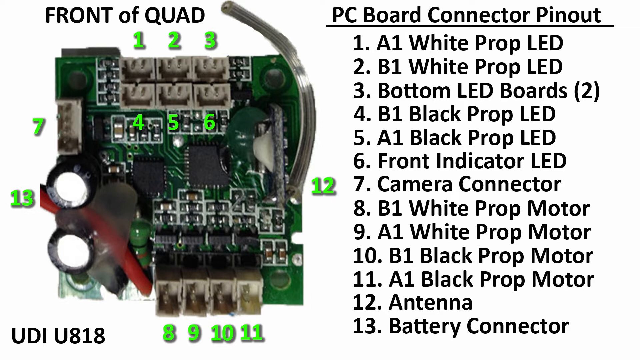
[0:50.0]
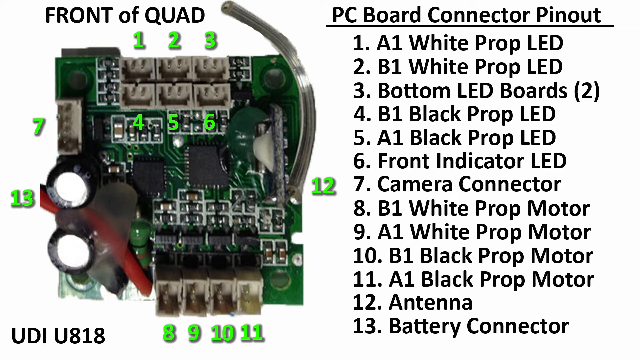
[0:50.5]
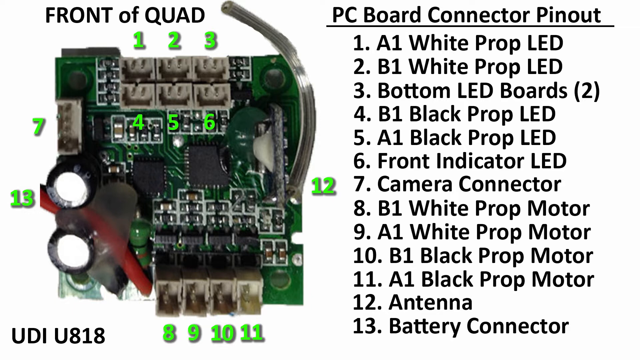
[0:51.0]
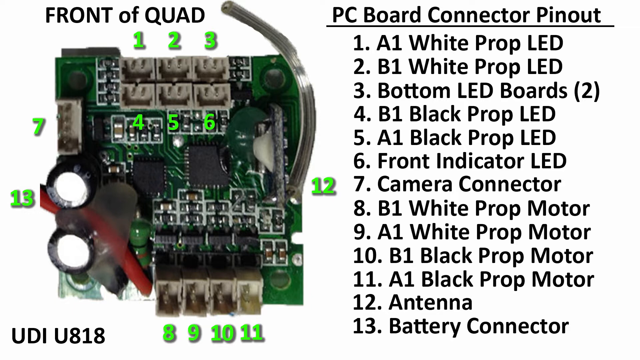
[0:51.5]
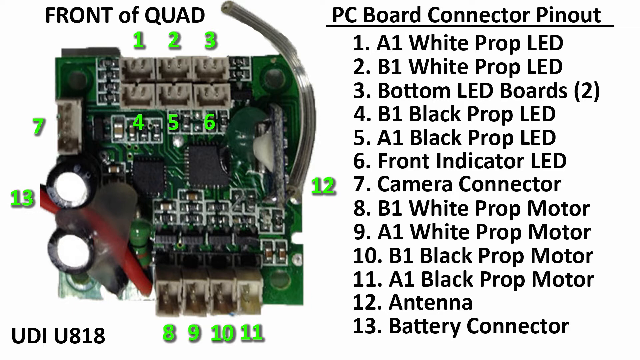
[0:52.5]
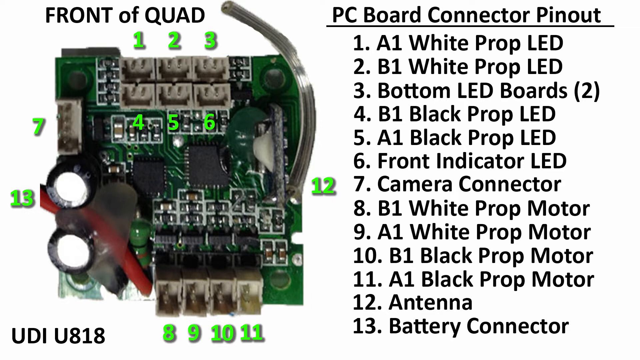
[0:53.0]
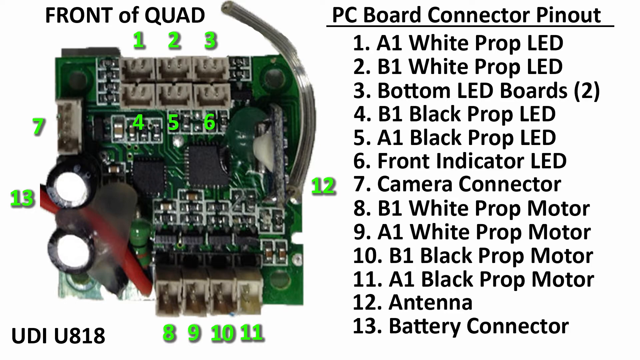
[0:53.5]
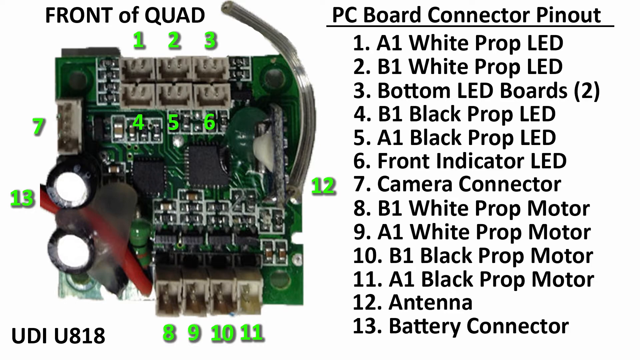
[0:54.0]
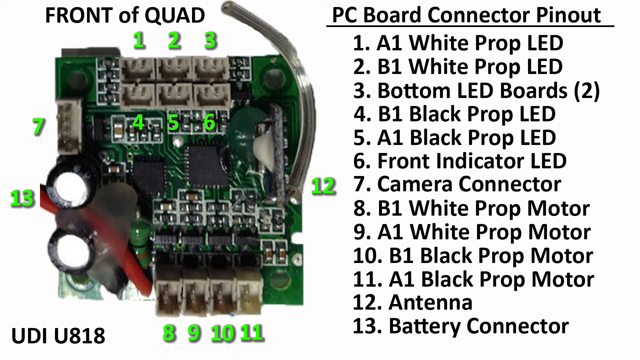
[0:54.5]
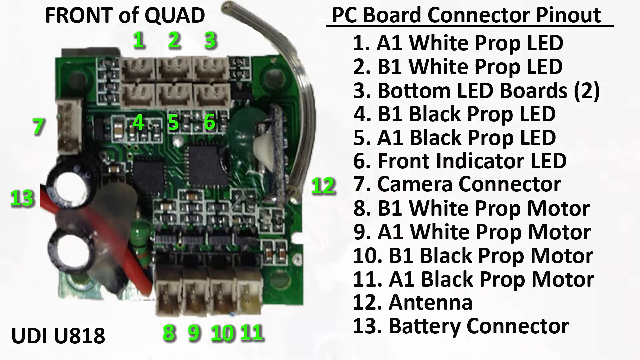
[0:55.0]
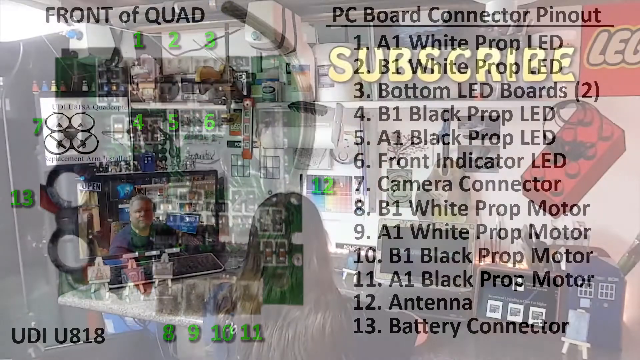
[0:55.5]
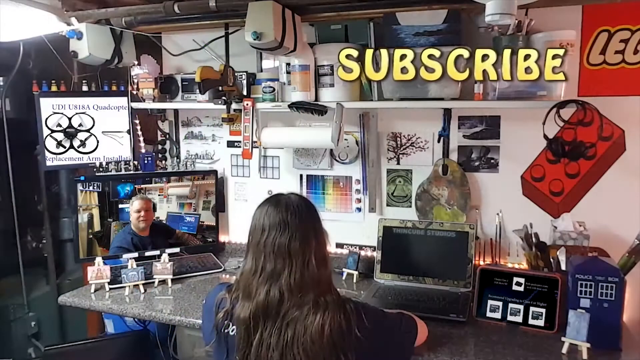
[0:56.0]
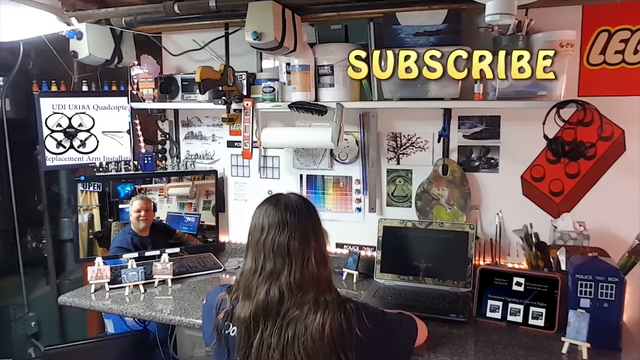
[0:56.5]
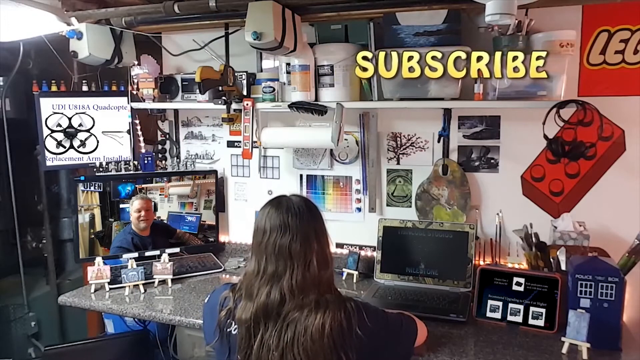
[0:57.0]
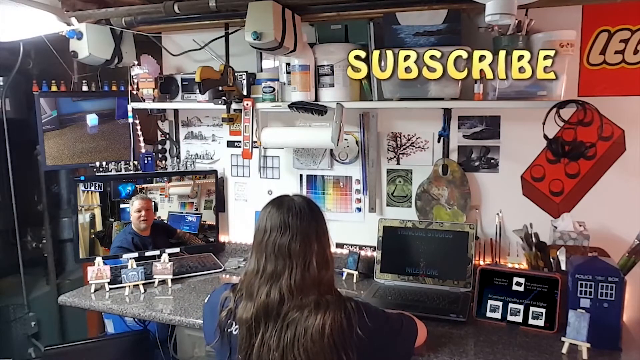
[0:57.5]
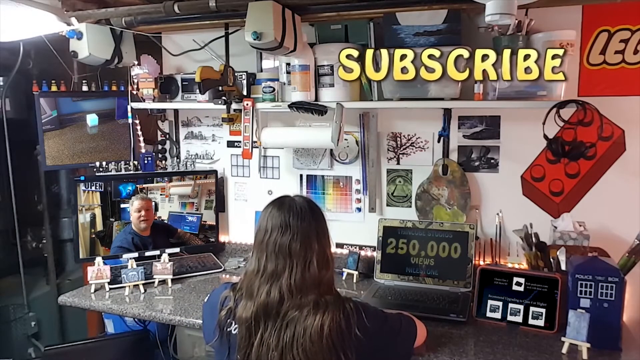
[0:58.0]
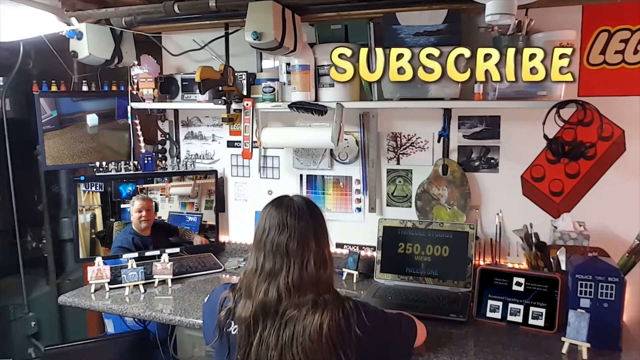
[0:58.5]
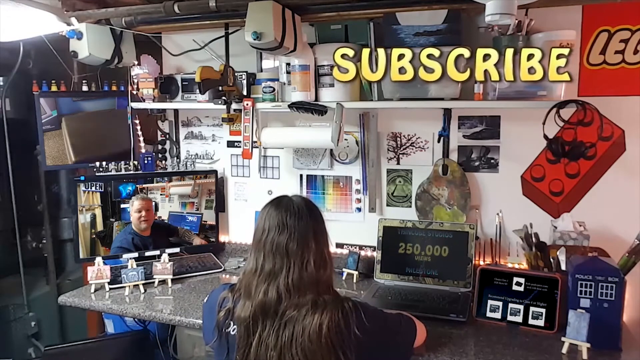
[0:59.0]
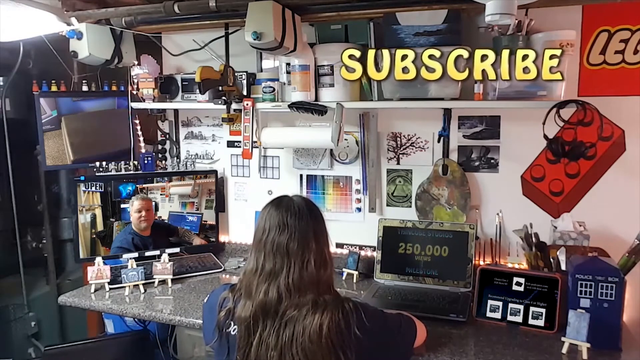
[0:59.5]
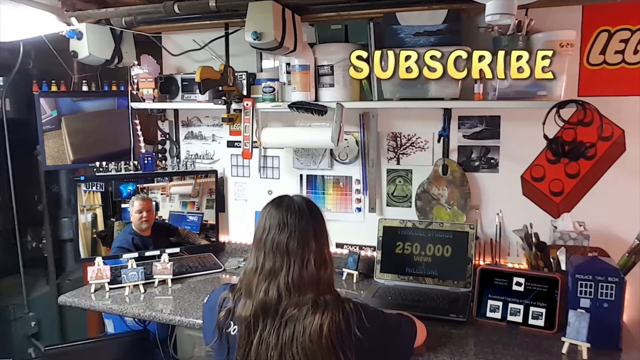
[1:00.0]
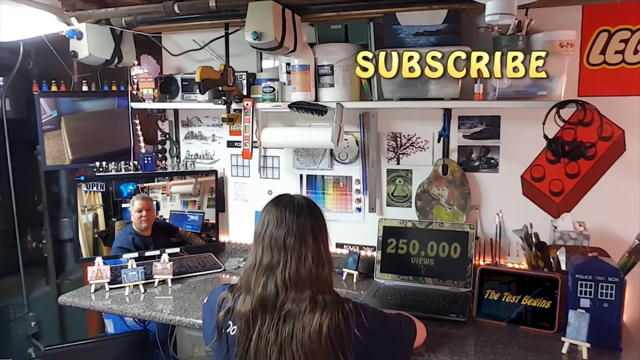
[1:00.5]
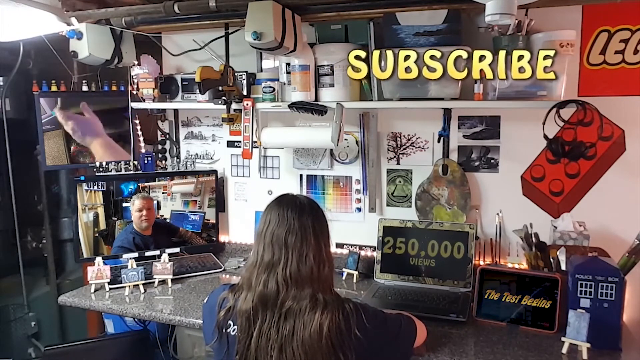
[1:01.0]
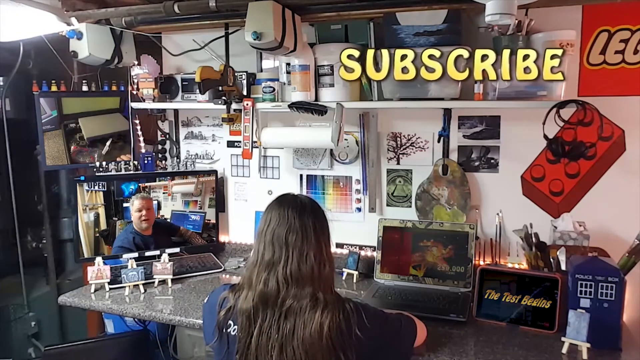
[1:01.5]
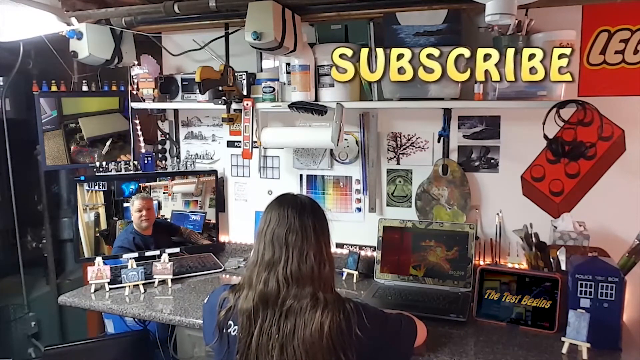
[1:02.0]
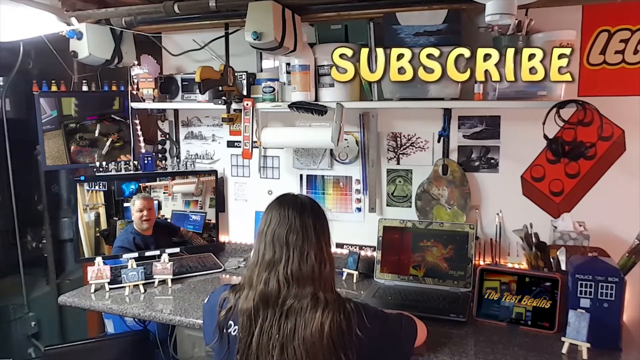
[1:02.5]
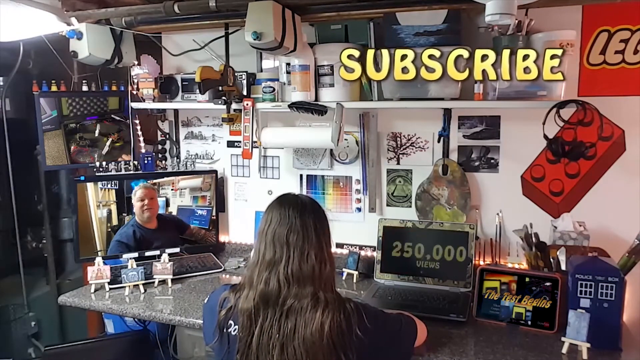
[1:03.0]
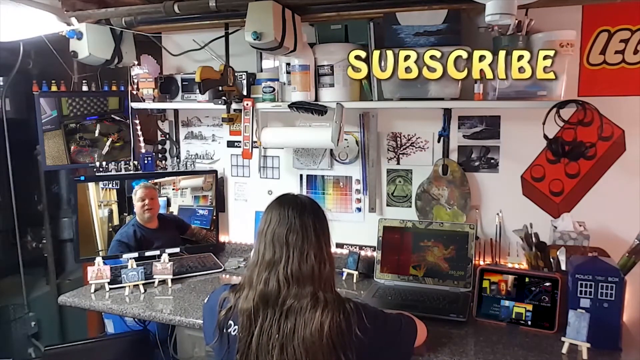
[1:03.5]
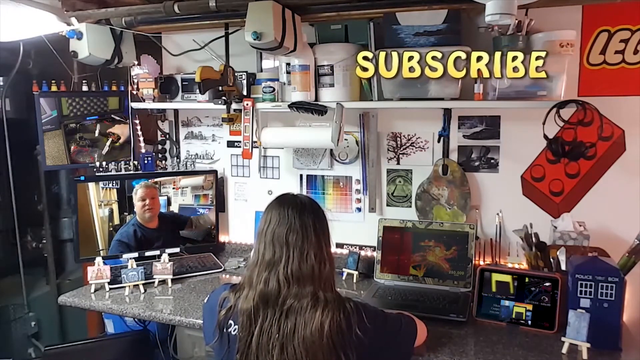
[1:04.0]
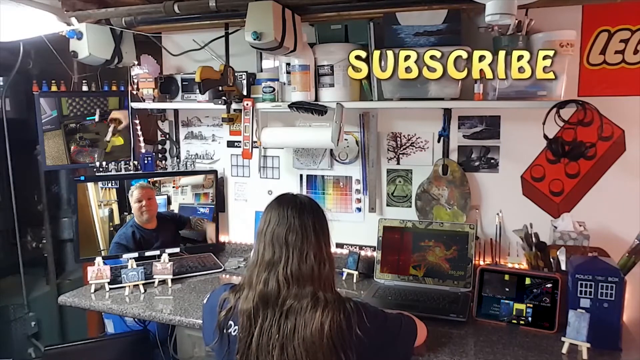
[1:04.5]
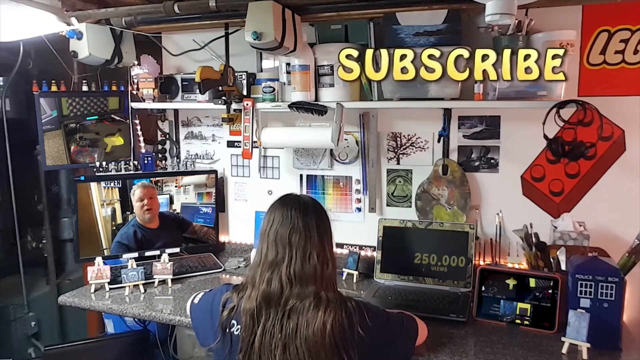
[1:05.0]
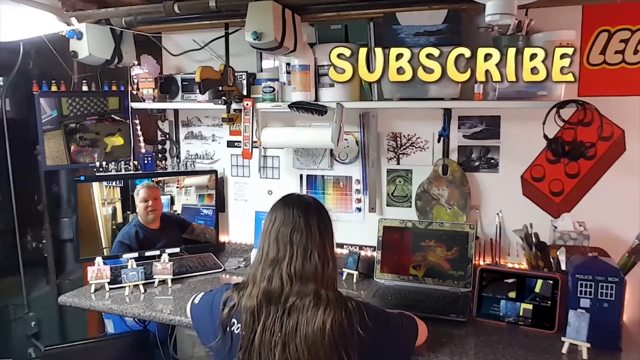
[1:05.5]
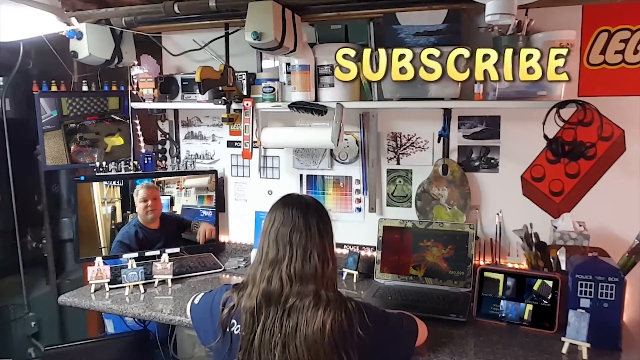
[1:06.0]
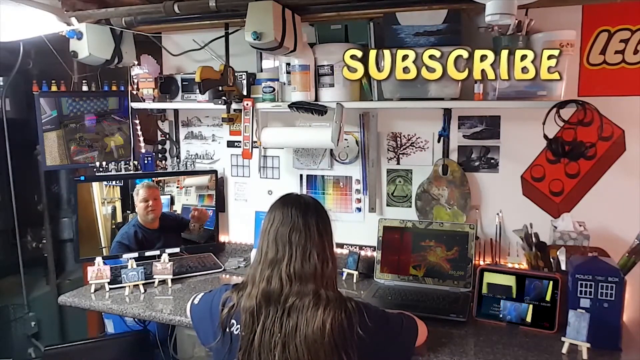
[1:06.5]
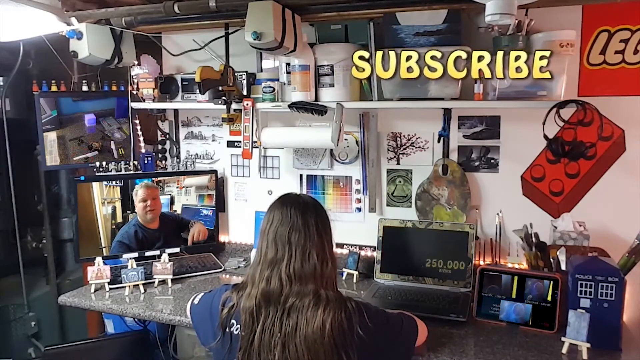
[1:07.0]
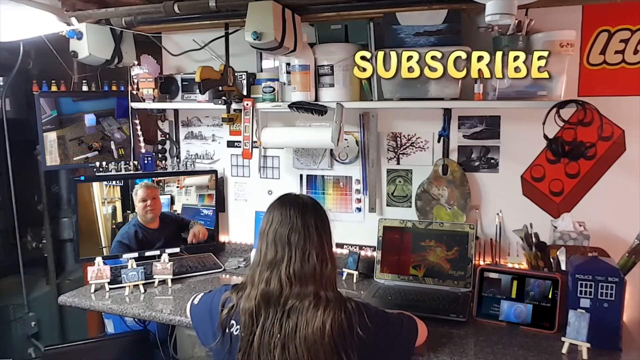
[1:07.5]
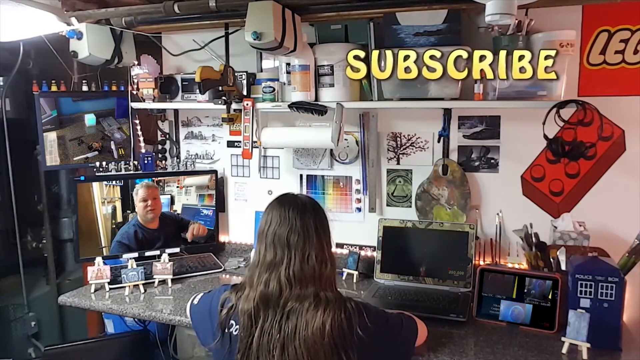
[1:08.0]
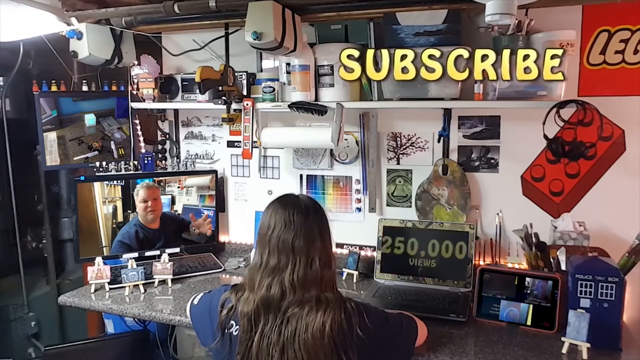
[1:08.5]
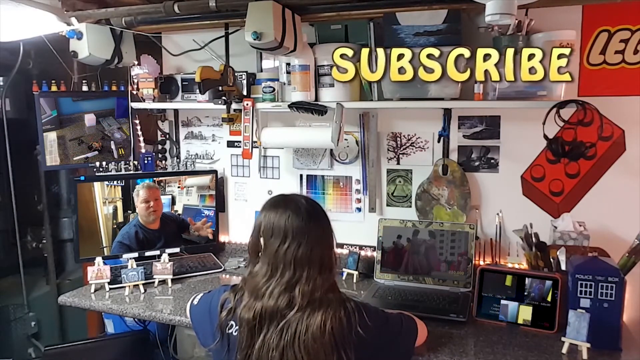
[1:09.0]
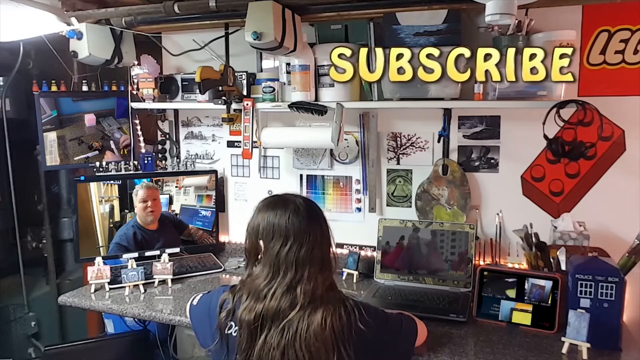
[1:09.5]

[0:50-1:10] A lady is seated in an office-like environment with multiple screens. On one screen, she watches a man who is talking, possibly tutoring her. Another screen seems to show a game. Another seems to show a surveillance camera, and another screen plays a video of someone fixing something. There is a lot of wiring and many things surround her, and she is the only subject; this seems to be her workspace for drones. The word "Subscribe" appears at the top of the video.